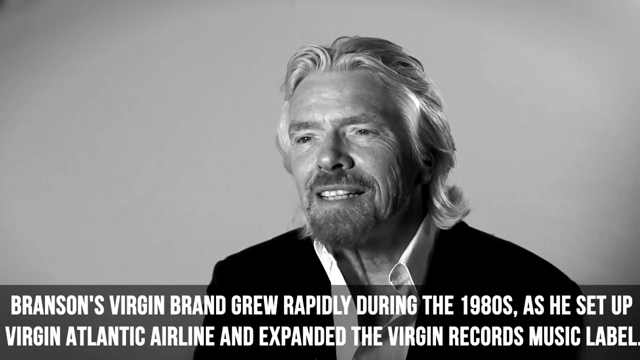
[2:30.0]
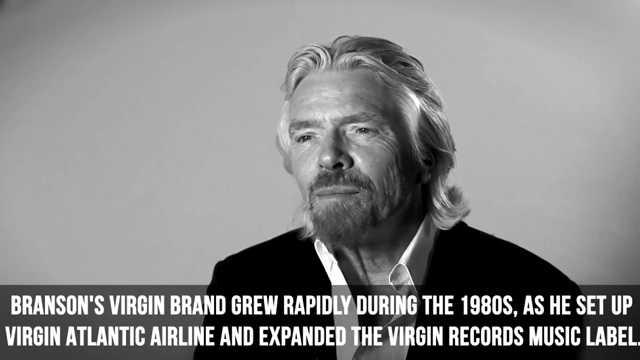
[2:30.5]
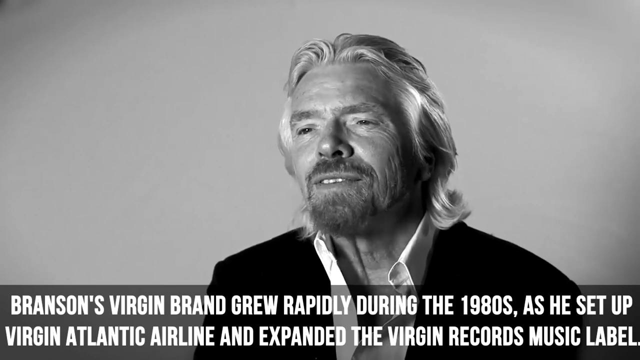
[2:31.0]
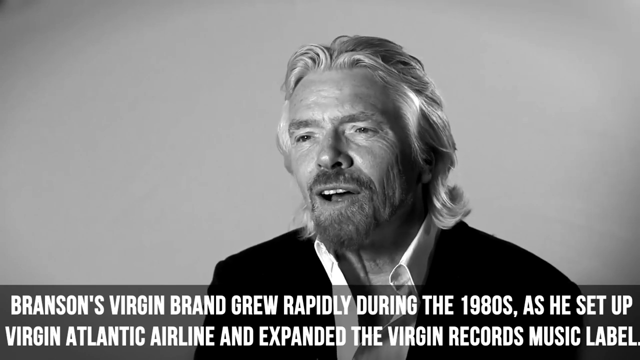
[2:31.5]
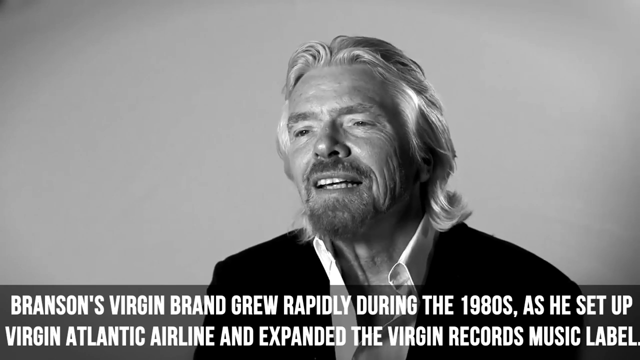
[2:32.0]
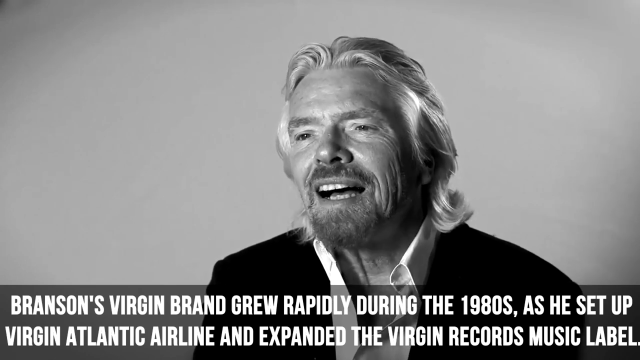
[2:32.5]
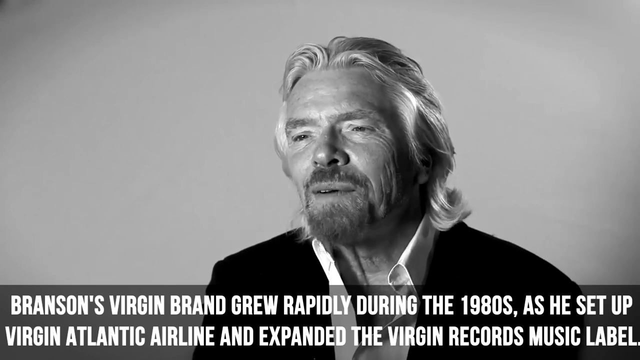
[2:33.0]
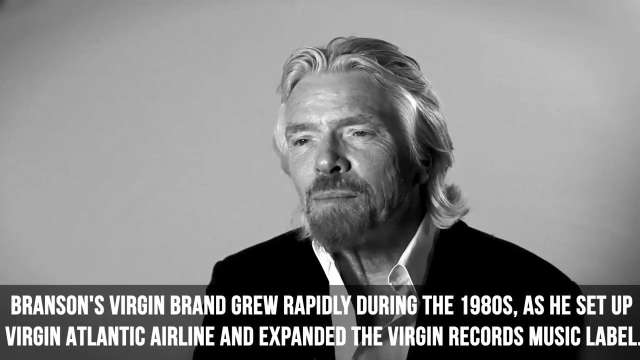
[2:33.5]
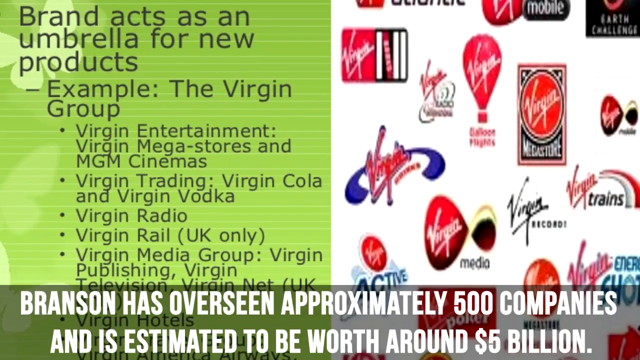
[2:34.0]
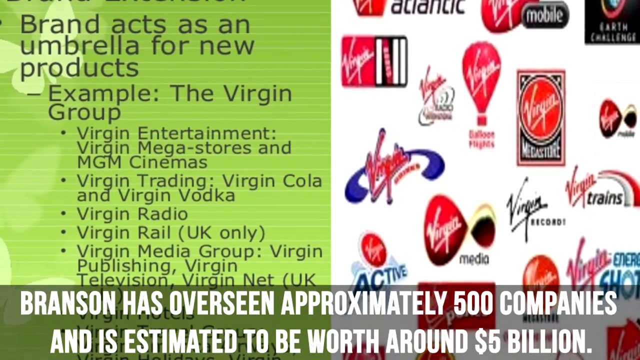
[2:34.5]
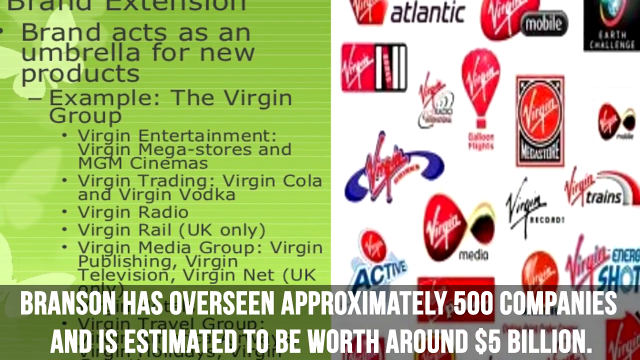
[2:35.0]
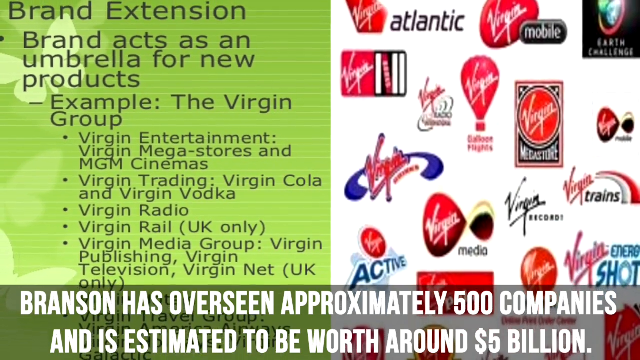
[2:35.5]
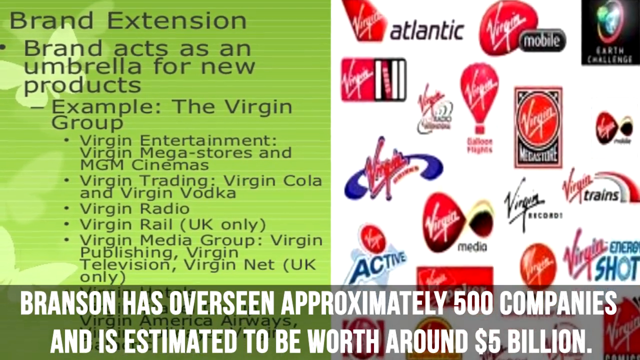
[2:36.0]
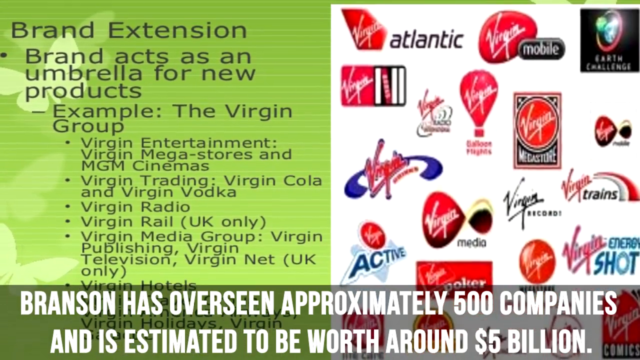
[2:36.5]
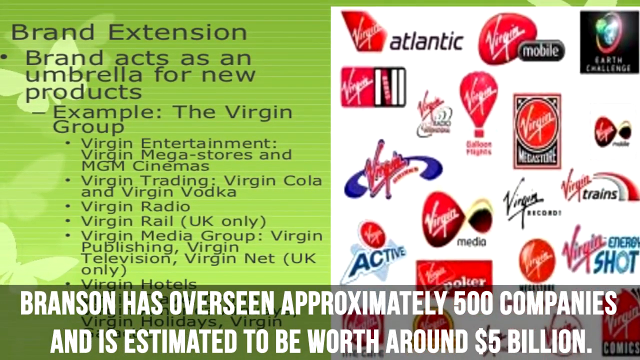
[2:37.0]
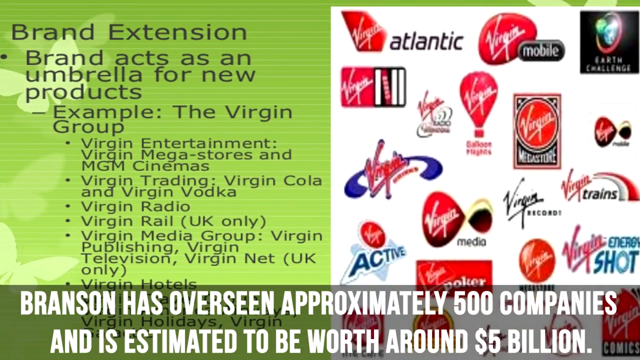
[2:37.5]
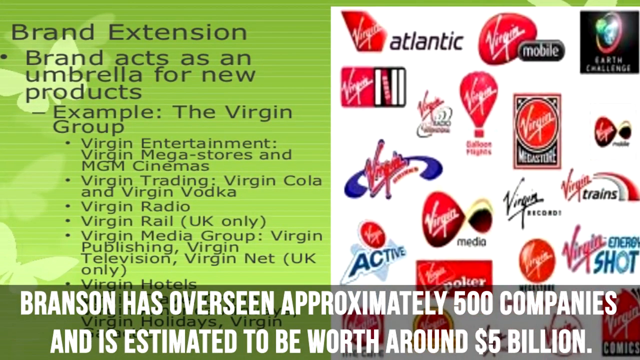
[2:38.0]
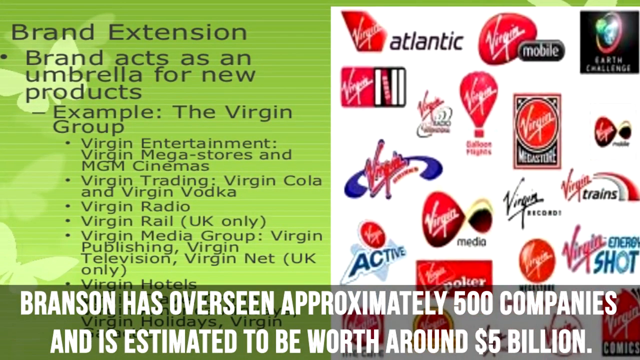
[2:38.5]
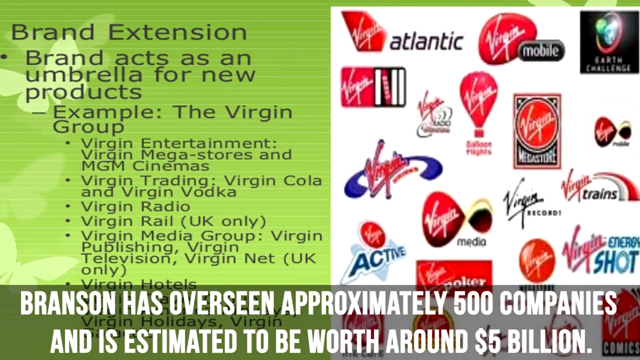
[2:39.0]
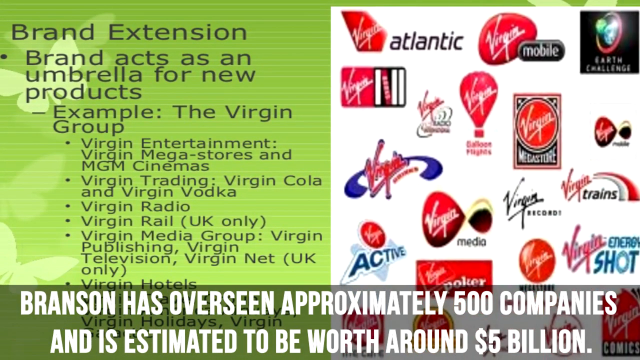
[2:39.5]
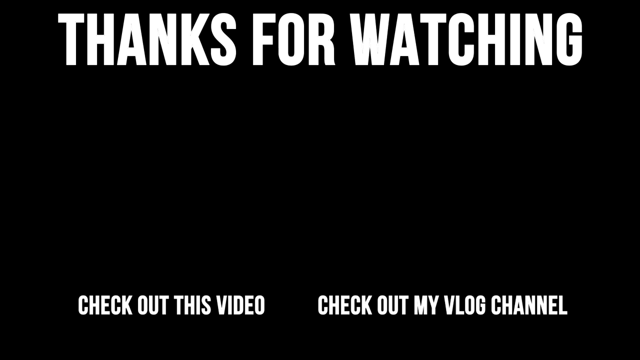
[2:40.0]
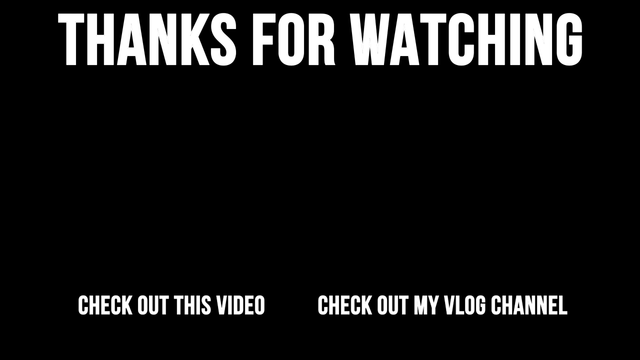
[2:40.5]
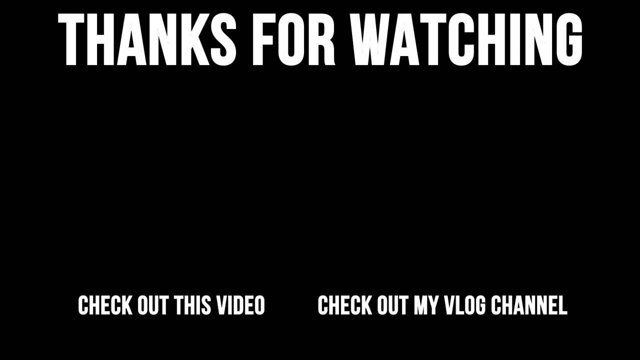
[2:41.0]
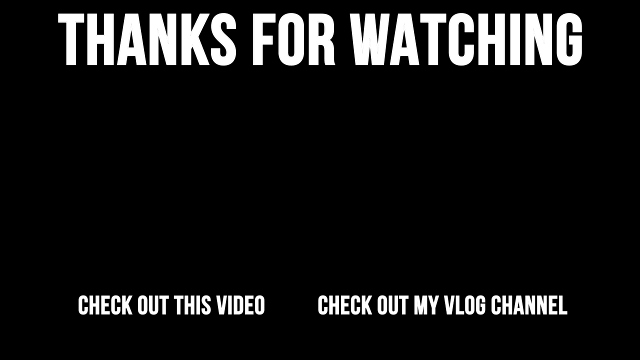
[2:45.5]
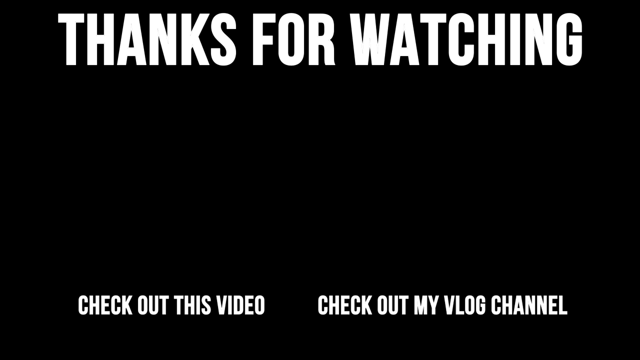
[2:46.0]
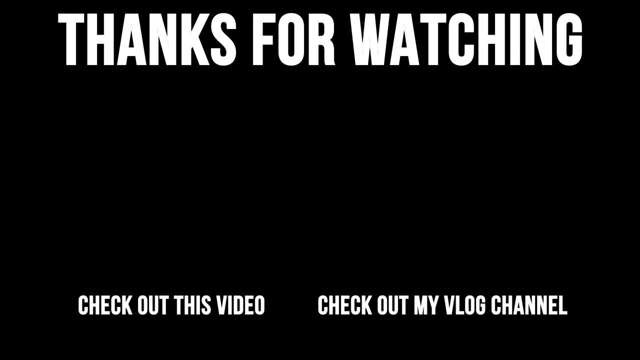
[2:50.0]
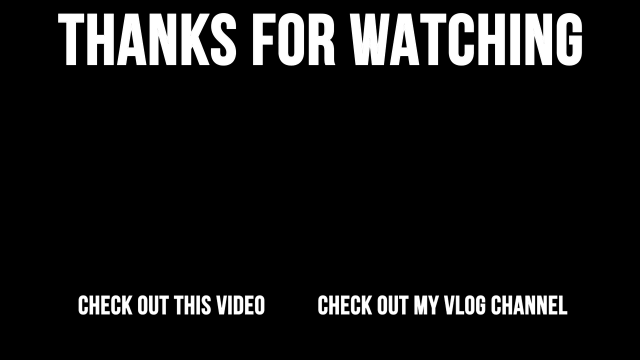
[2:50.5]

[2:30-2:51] An older Richard Branson talks, with text saying Branson's Virgin brand grew rapidly during the 1980s as he set up Virgin Atlantic Airlines and expanded the Virgin Records label. The video cuts to a graphic with various Virgin ventures on the right: Atlantic, Virgin Mobile, Virgin Radio, Megastore, Media, Trains and records. On the left, green, black and brown text lists companies under the Virgin umbrella: Virgin Media Group, Virgin Entertainment, Virgin Megastore and MGM Cinemas, Virgin Cola, Virgin Vodka, apparently Virgin Radio, Virgin Rail (UK only), Virgin Publishing, Virgin Media, Virgin Network and Virgin Hotels. The video ends on a large black background with big white text at the top reading "thanks for watching" and, at the bottom, "check out this video, check out my vlog channel."